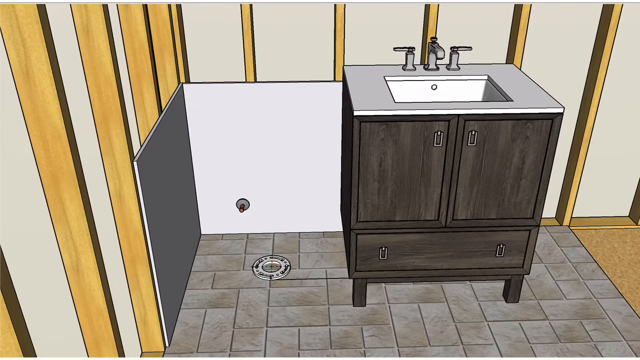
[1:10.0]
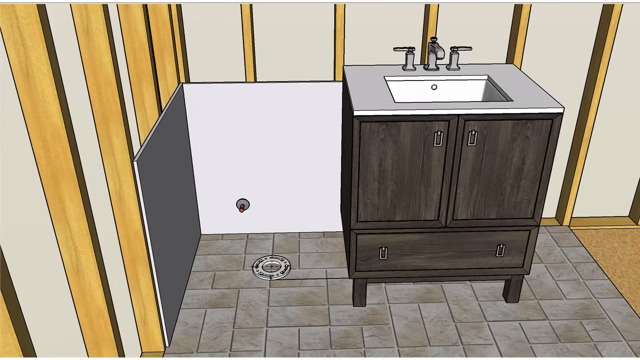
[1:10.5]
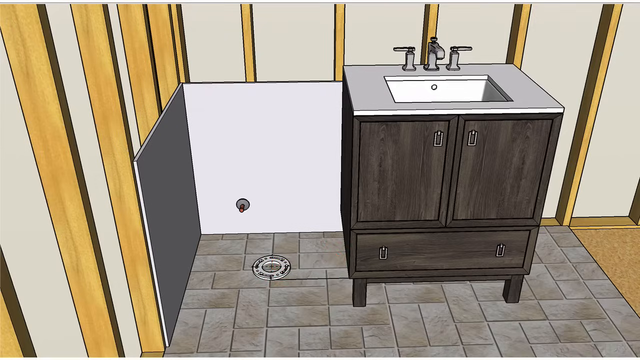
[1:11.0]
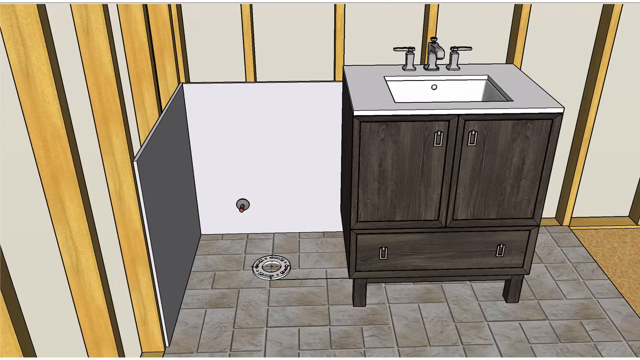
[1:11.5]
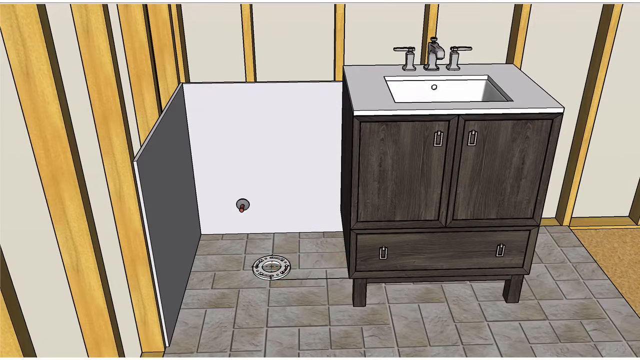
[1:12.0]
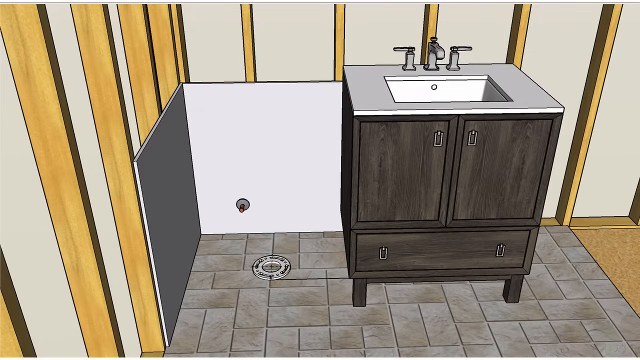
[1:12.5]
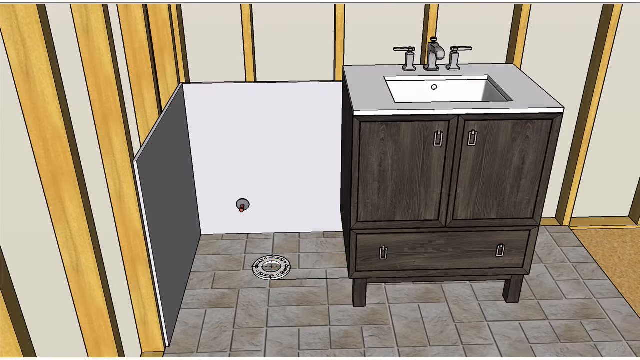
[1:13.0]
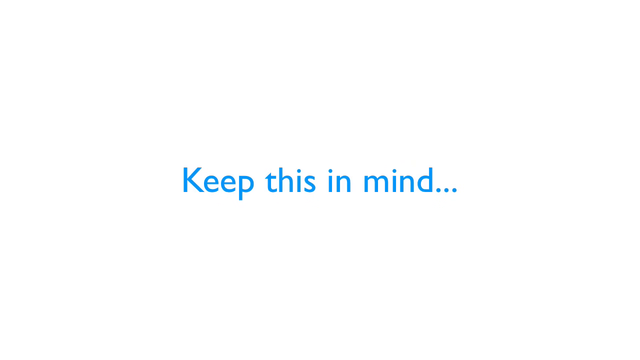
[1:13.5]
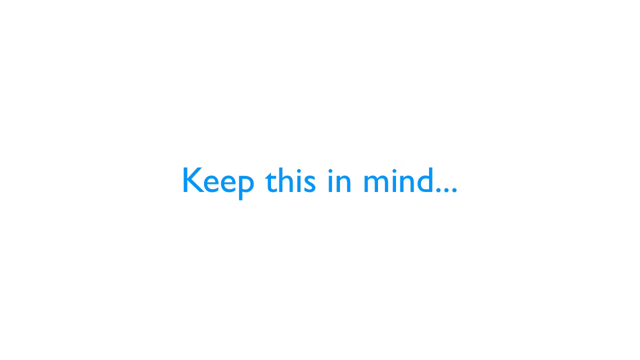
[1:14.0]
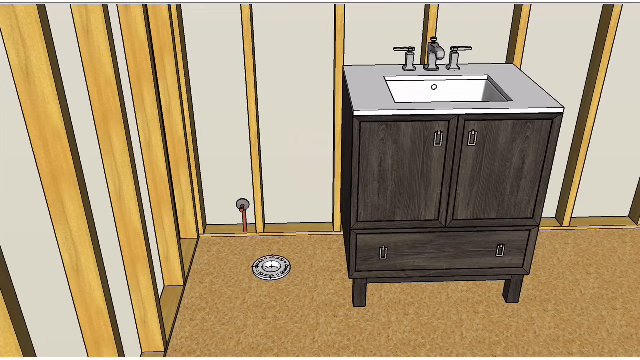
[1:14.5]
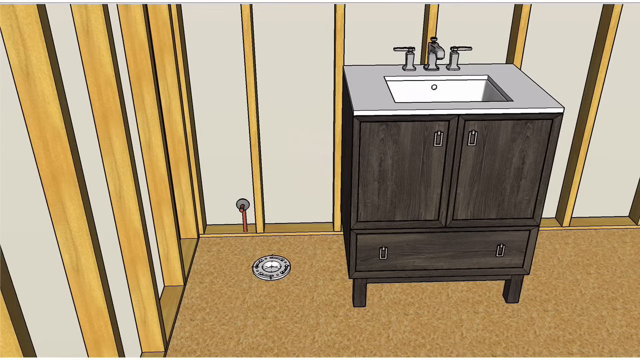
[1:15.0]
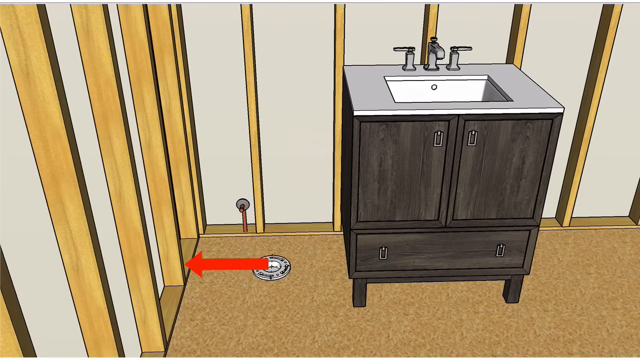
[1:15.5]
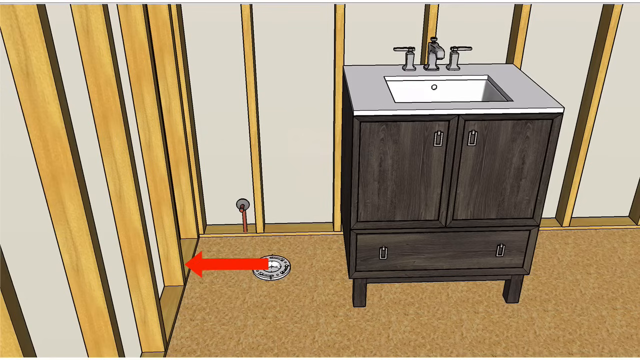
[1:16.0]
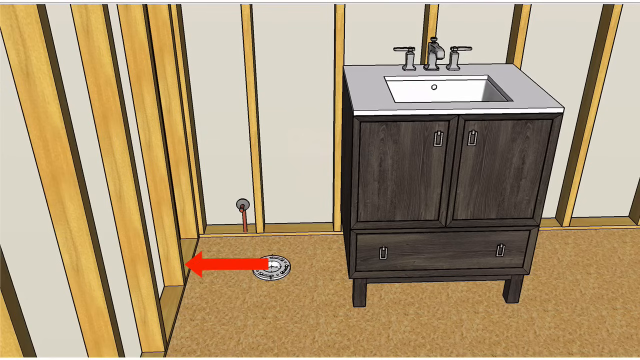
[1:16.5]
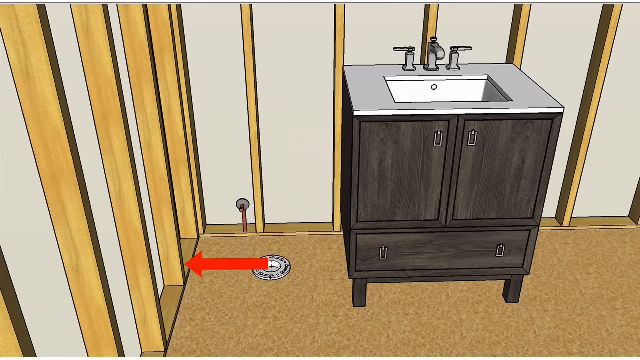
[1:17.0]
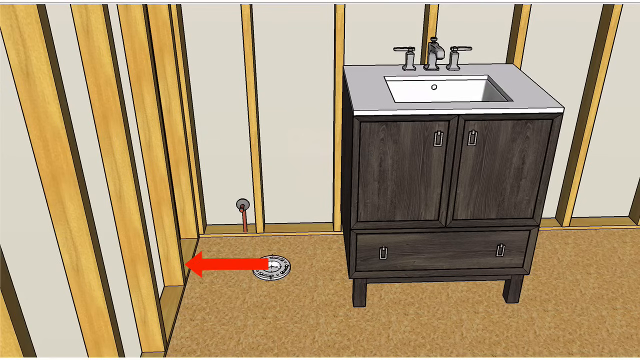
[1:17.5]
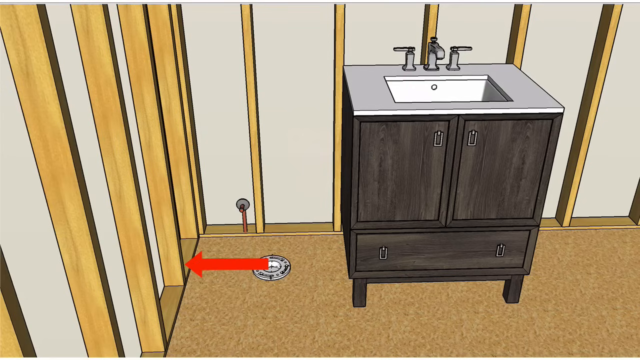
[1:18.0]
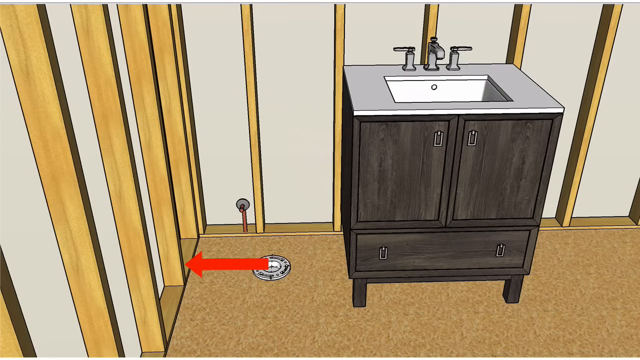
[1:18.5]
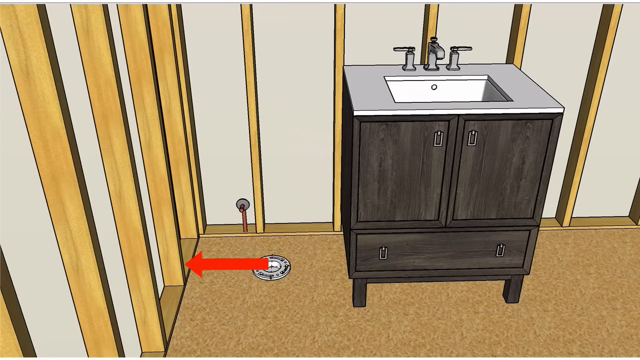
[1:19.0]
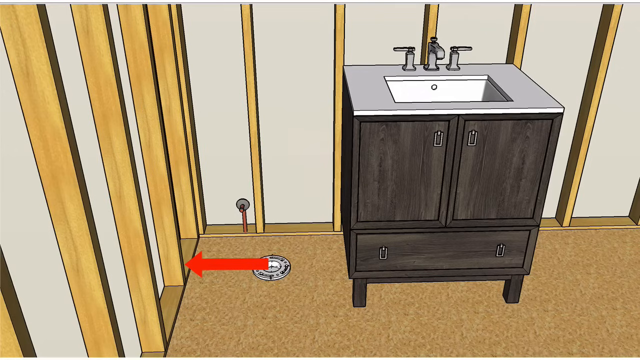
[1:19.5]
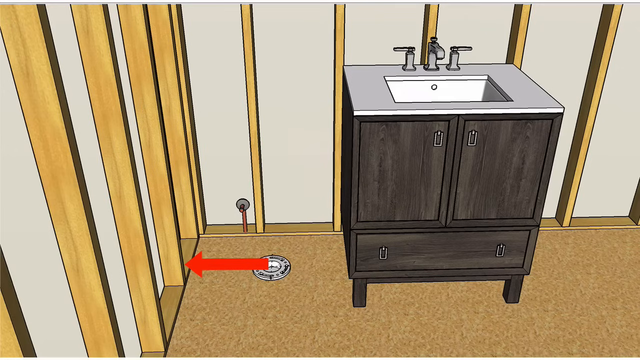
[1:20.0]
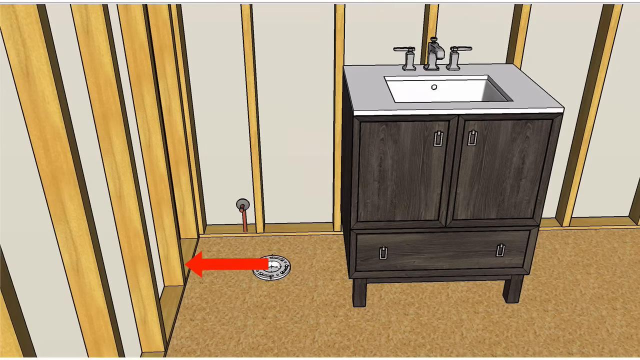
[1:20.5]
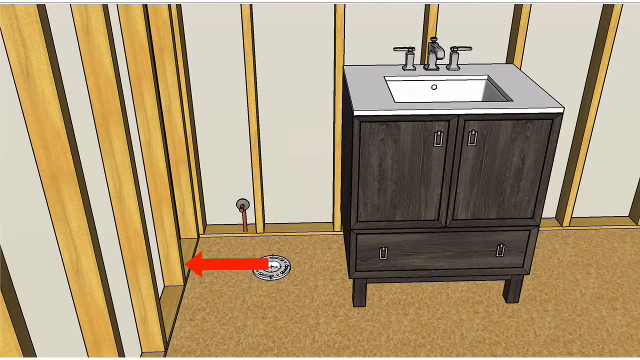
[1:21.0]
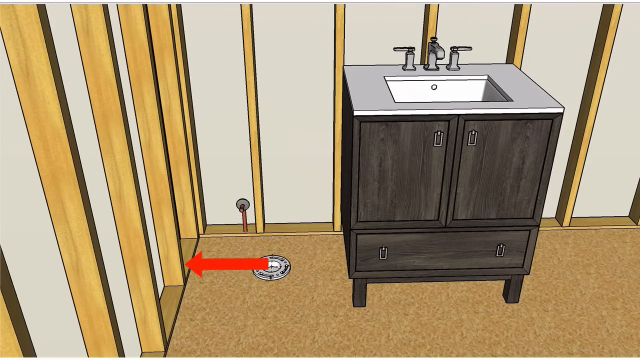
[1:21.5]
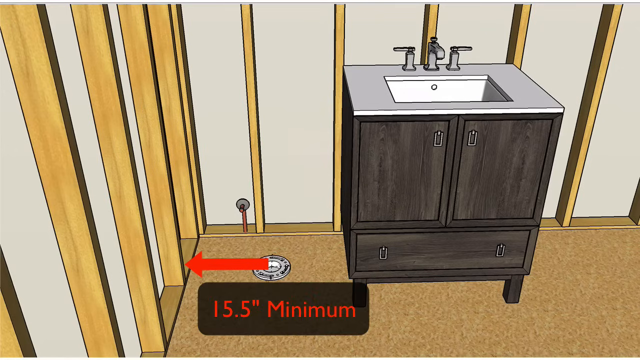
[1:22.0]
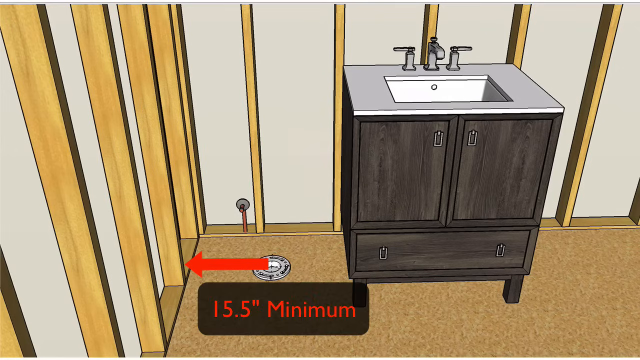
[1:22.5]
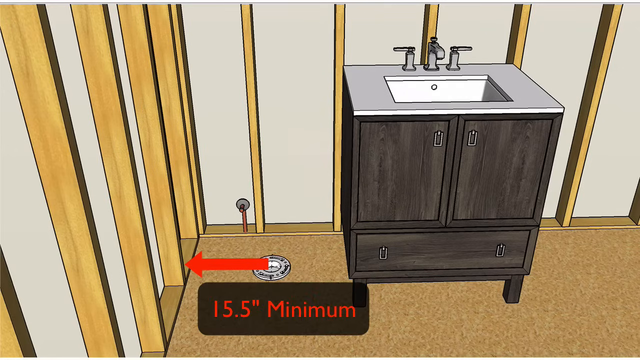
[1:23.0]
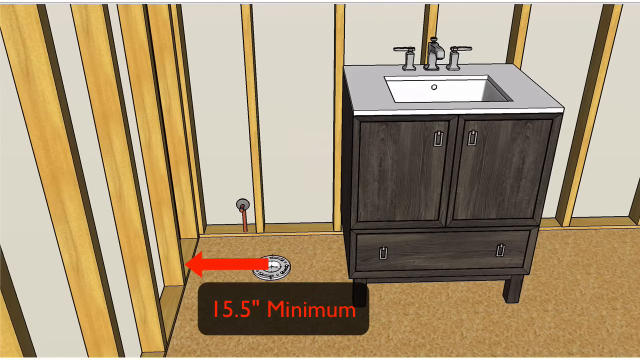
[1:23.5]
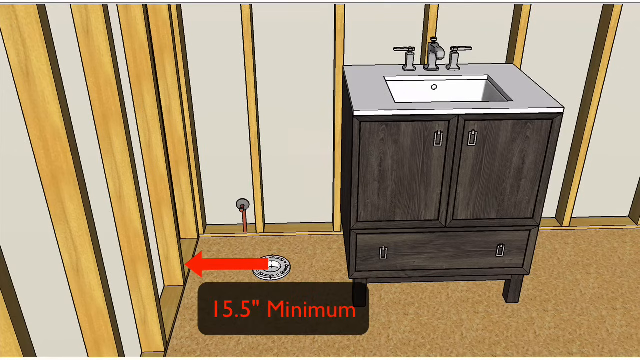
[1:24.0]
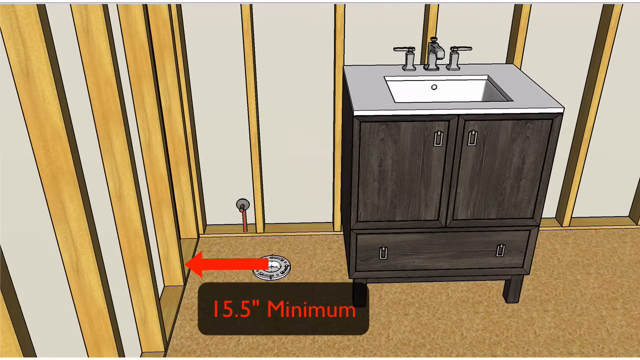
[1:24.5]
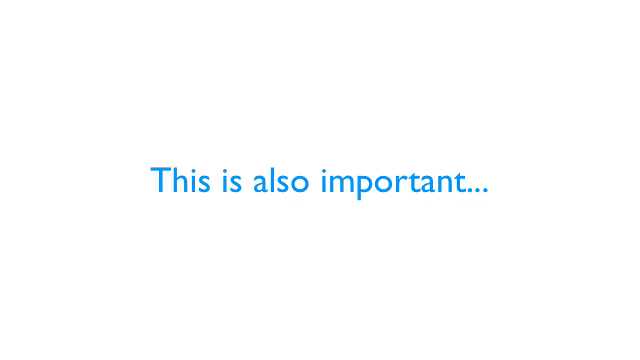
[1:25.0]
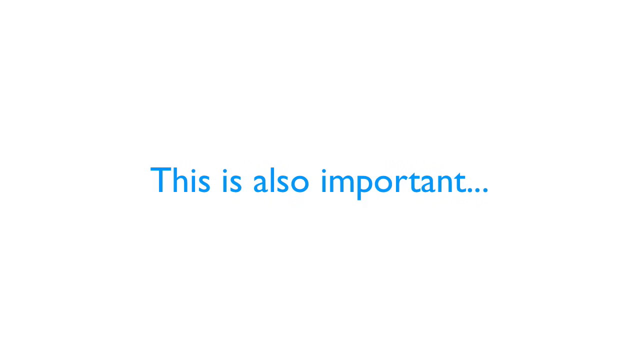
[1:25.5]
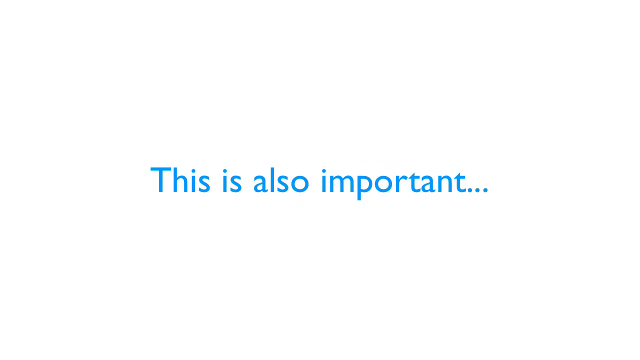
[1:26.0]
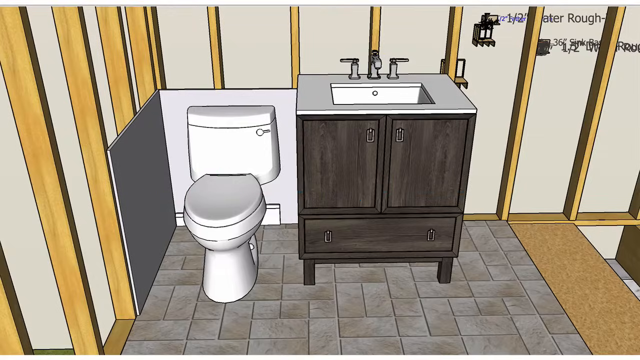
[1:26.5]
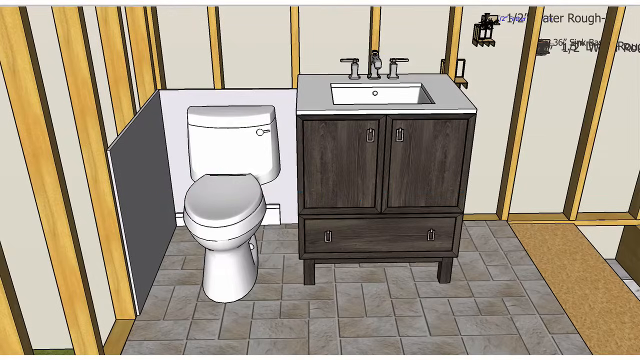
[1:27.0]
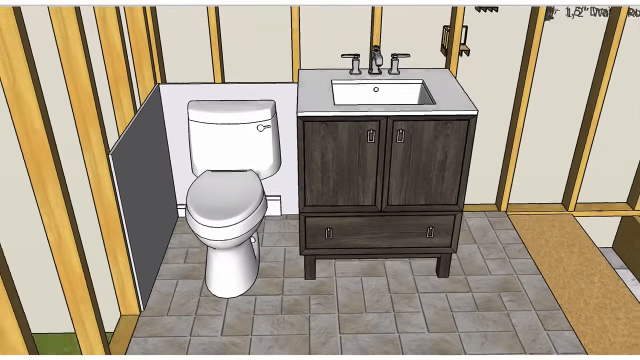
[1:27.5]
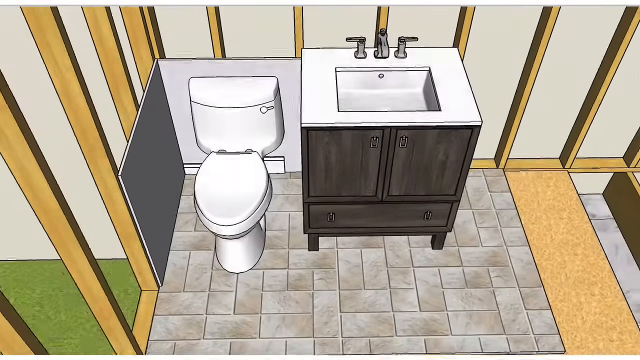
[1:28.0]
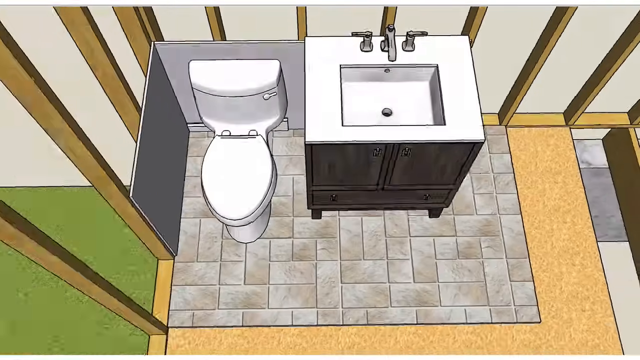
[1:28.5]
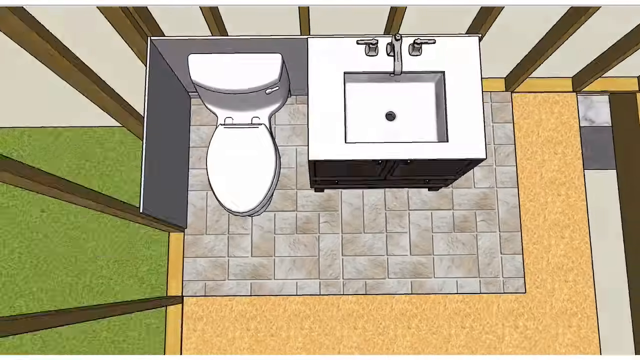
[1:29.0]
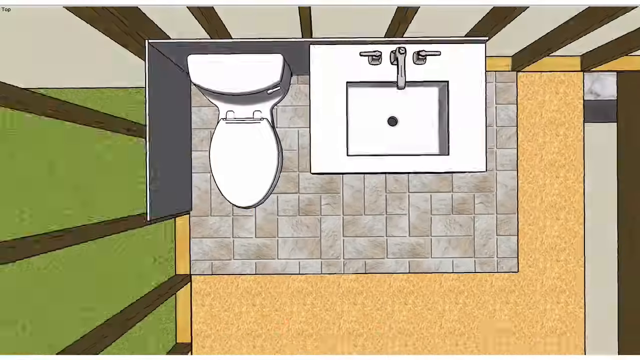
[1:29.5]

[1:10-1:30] An animated model shows wooden frames, a tiled floor, a drain on the floor, and faucets on a toilet sink sitting on a wooden cupboard. Blue text on a white background then reads "Keep this in mind...". The scene returns to the toilet, now with a red arrow pointing from the drain on the floor to one of the wooden frames on the wall; the tiled floor has been replaced with a wooden floor. The text "15.5'' minimum" is on a transparent dark grey background. The text "This is also important..." then appears on a plain white background. The scene returns to the toilet, showing the earlier sink with faucets on a wooden cupboard, but now also featuring a toilet seat and a flushing cistern. The view gradually transitions into an aerial view of the toilet, with the text "21'' Clearnace" and an IPC code at the bottom of the screen and a red arrow pointing from the toilet seat toward the bottom of the screen.